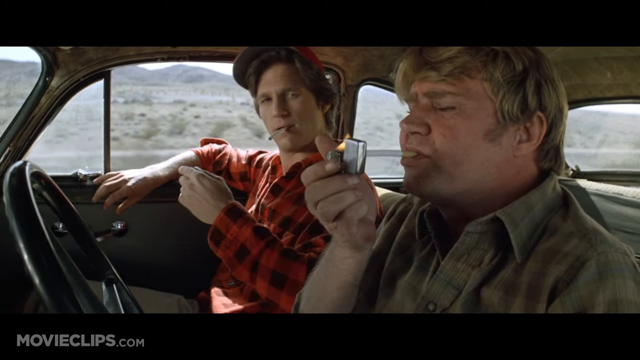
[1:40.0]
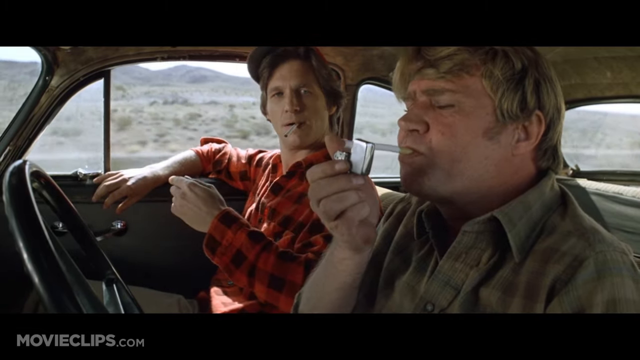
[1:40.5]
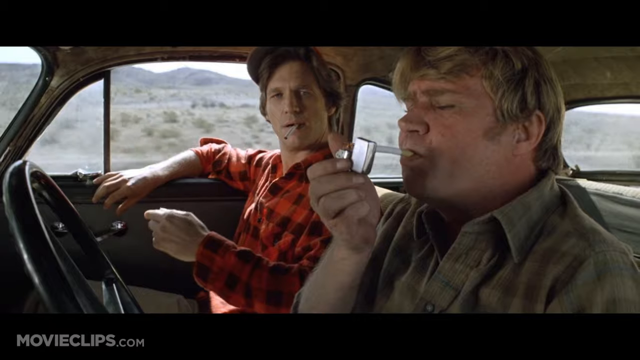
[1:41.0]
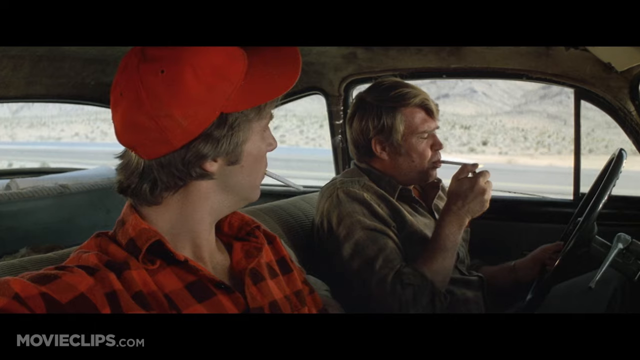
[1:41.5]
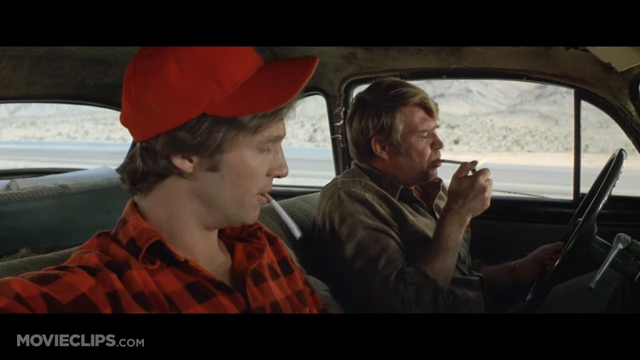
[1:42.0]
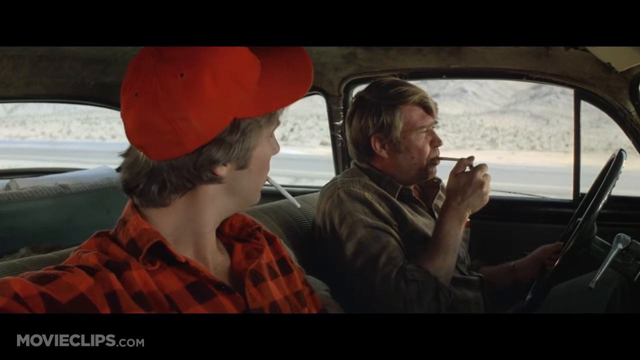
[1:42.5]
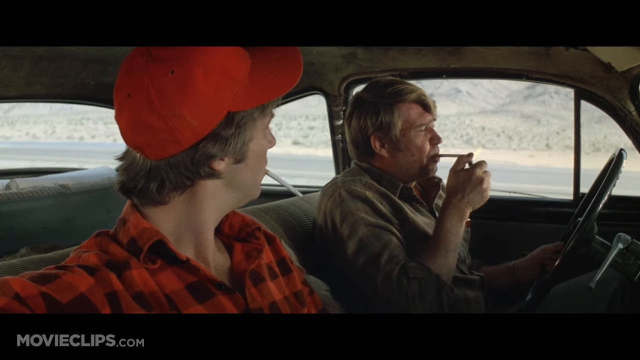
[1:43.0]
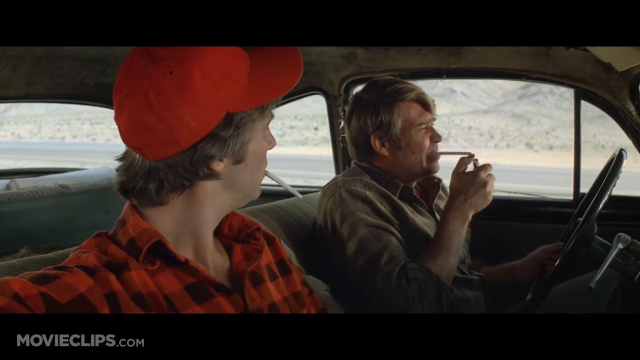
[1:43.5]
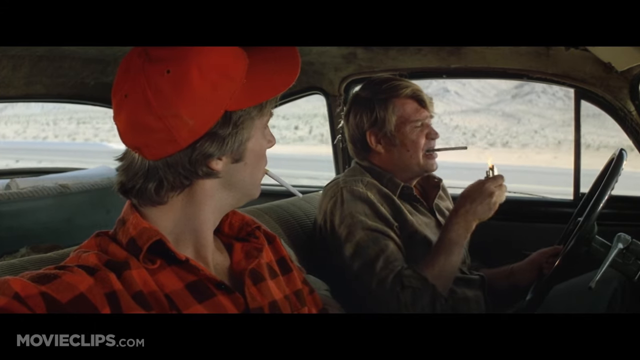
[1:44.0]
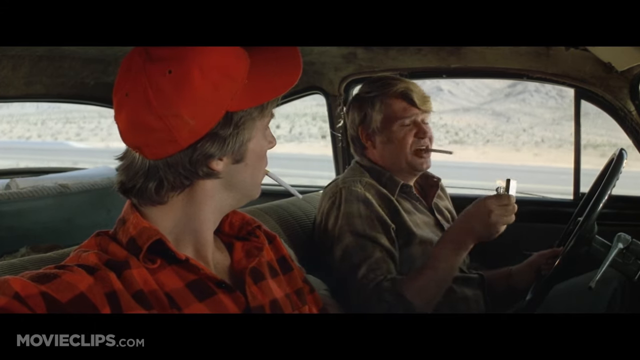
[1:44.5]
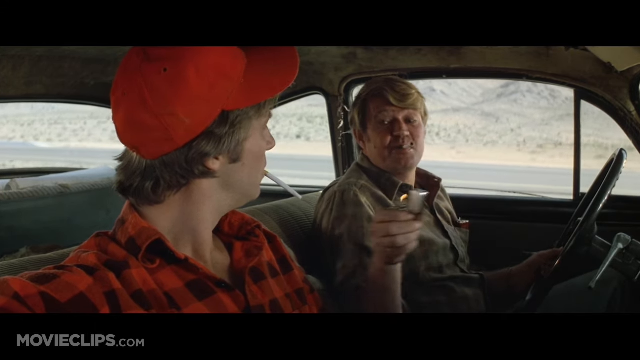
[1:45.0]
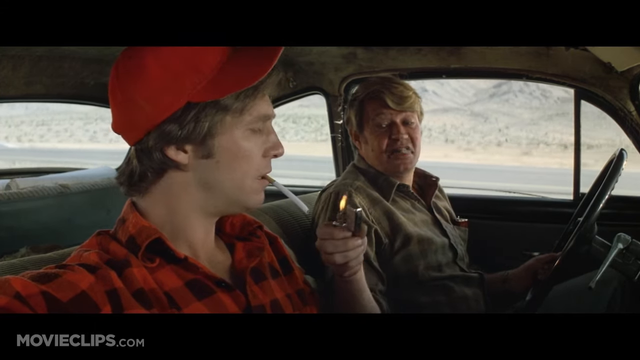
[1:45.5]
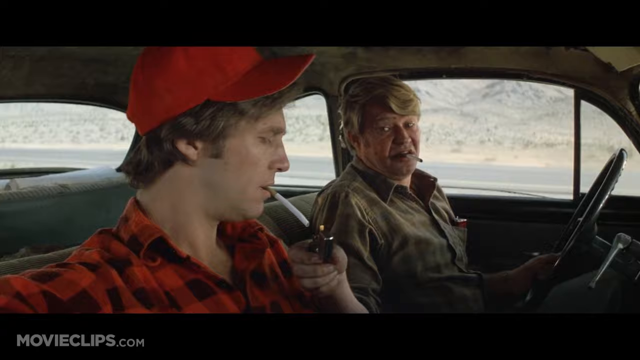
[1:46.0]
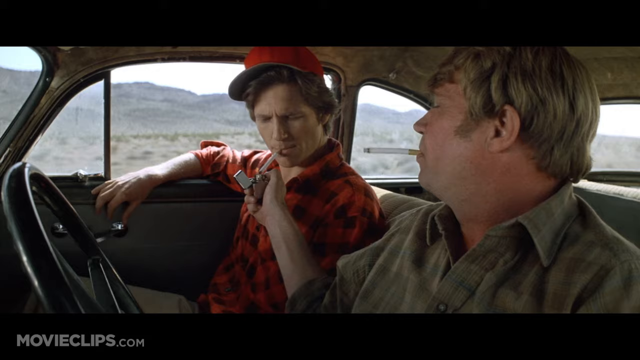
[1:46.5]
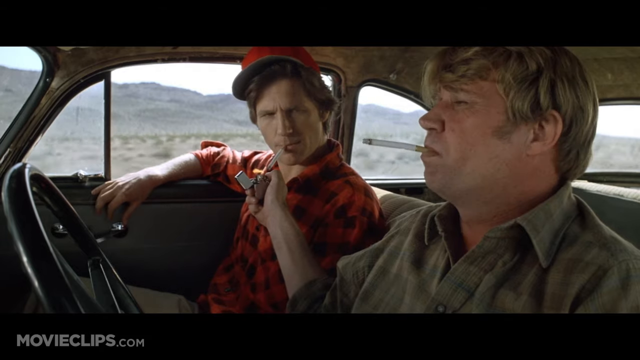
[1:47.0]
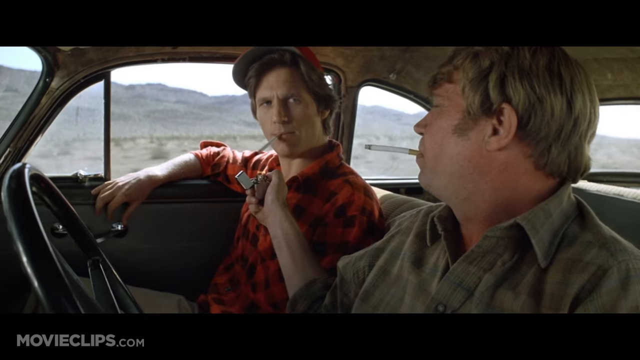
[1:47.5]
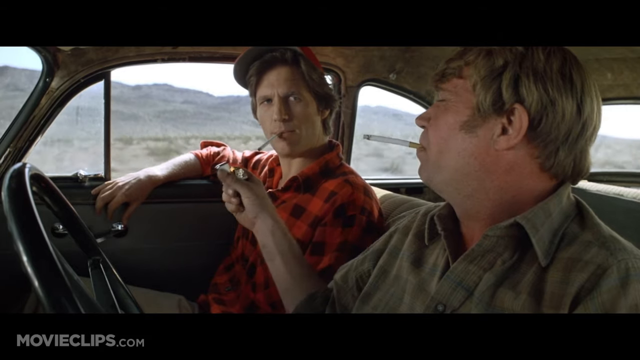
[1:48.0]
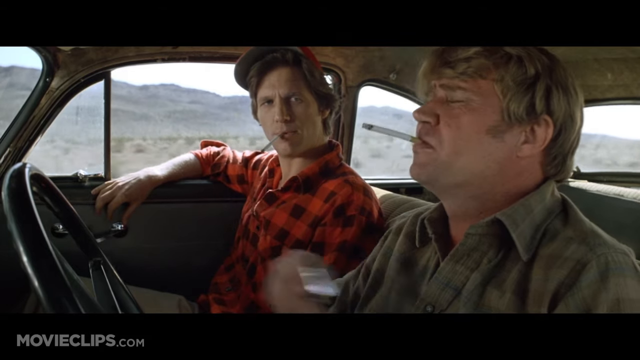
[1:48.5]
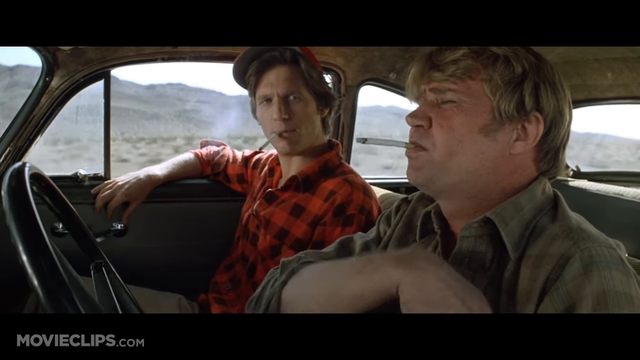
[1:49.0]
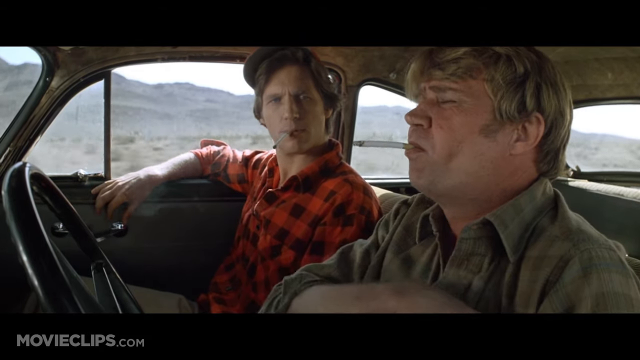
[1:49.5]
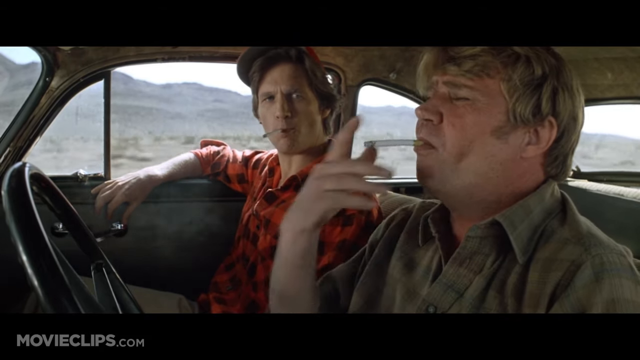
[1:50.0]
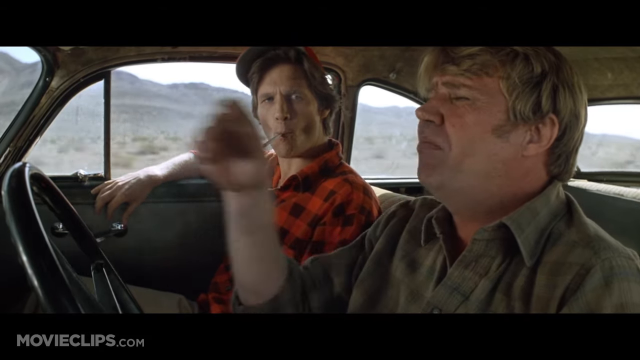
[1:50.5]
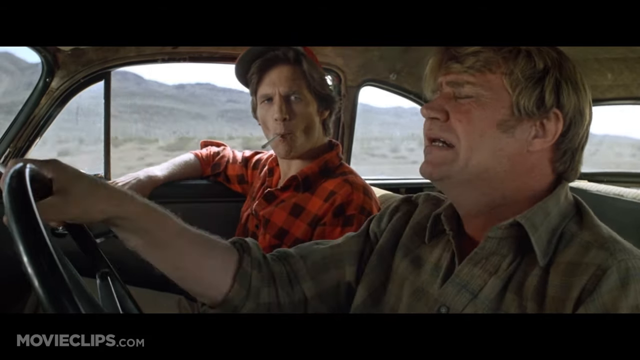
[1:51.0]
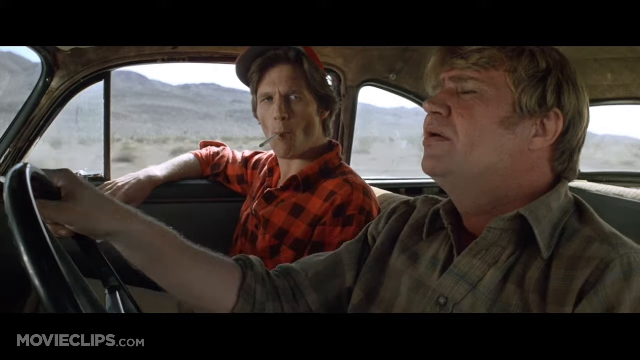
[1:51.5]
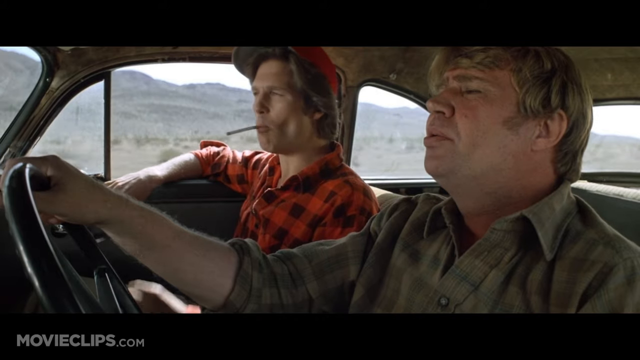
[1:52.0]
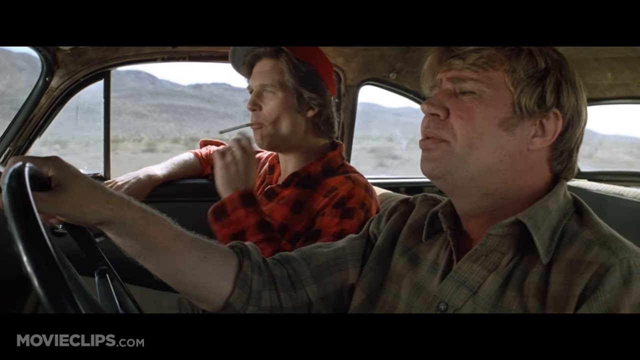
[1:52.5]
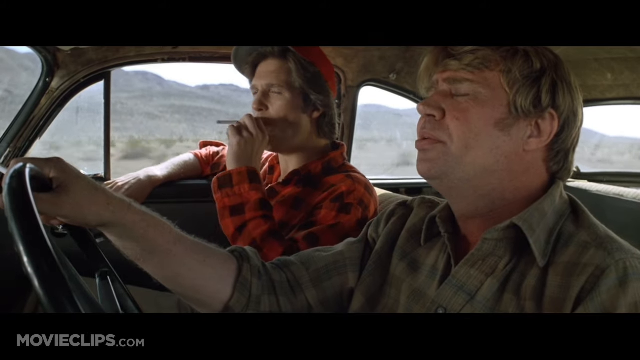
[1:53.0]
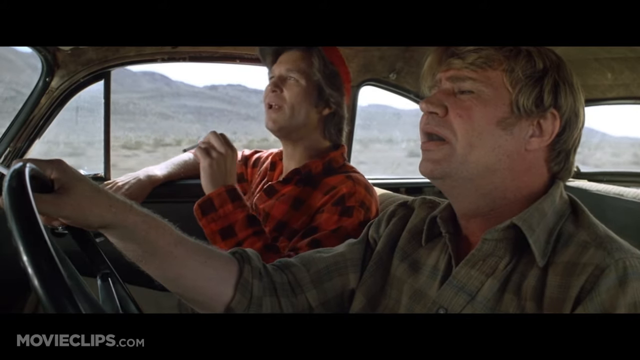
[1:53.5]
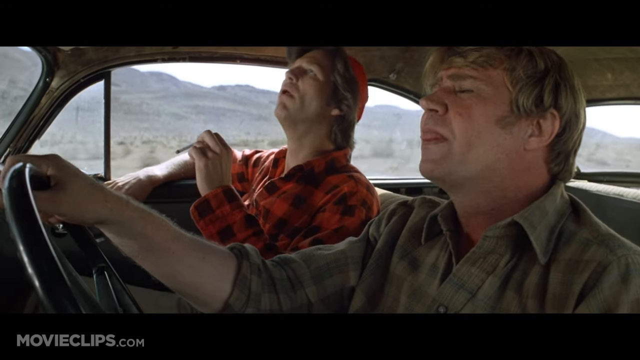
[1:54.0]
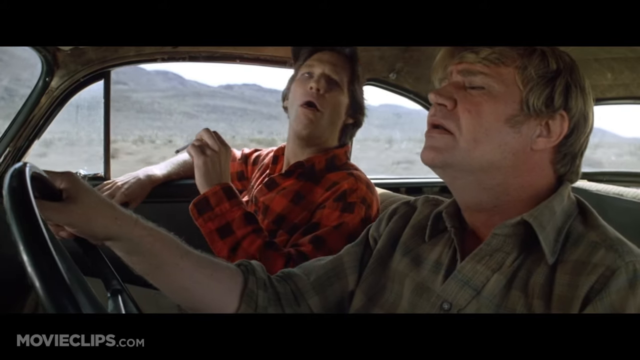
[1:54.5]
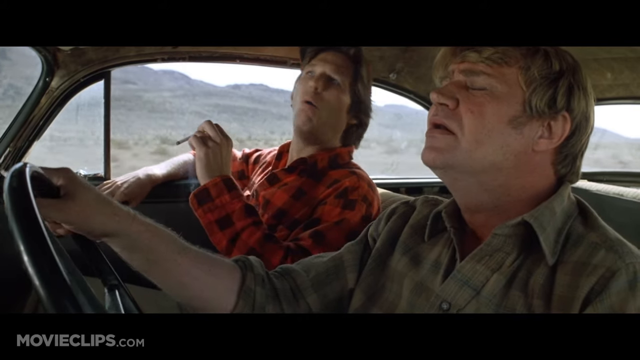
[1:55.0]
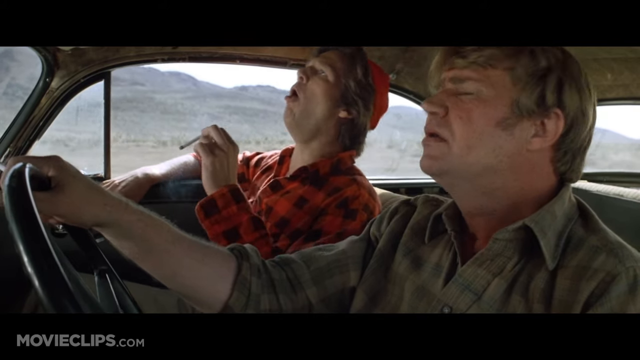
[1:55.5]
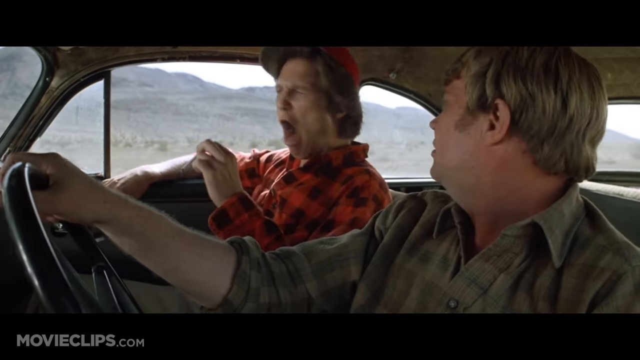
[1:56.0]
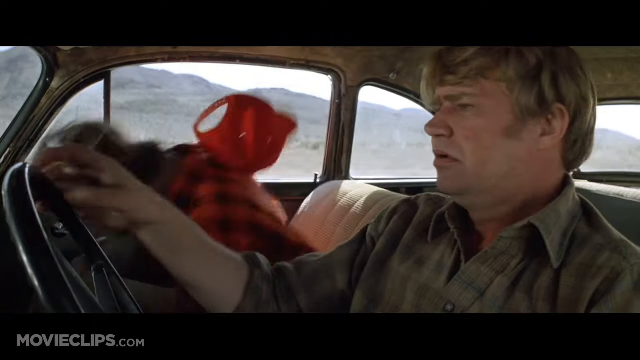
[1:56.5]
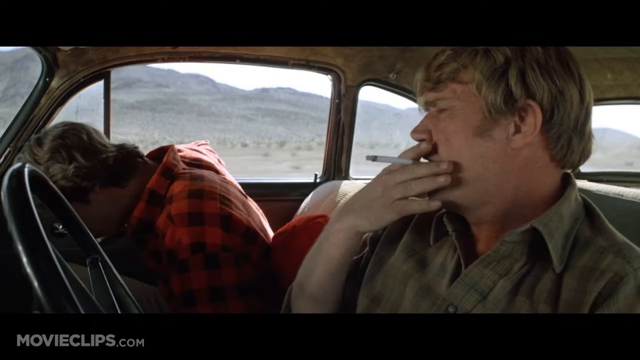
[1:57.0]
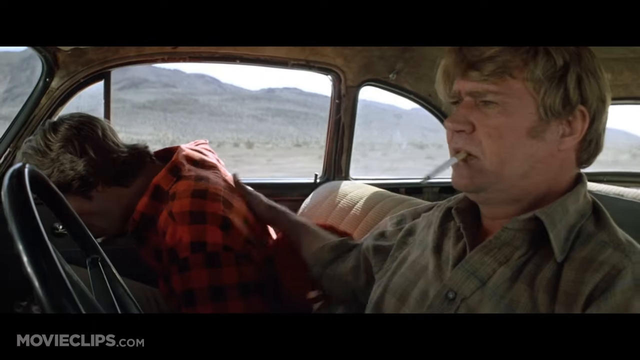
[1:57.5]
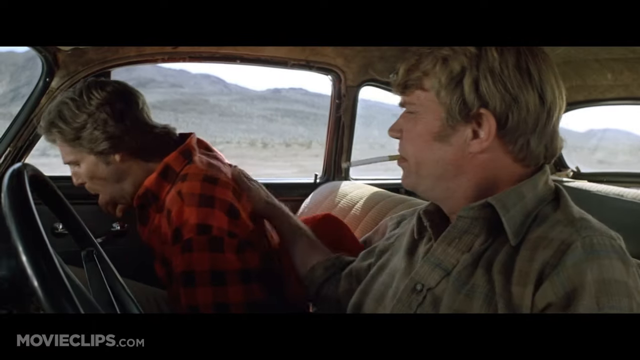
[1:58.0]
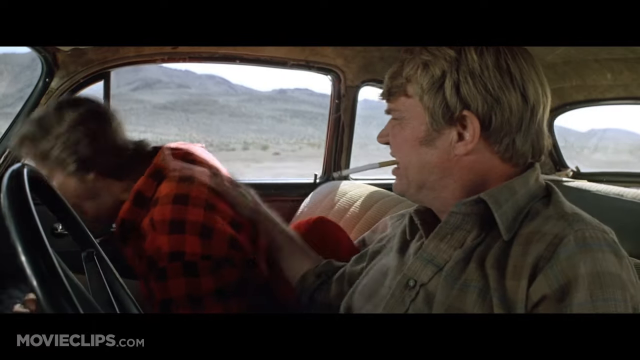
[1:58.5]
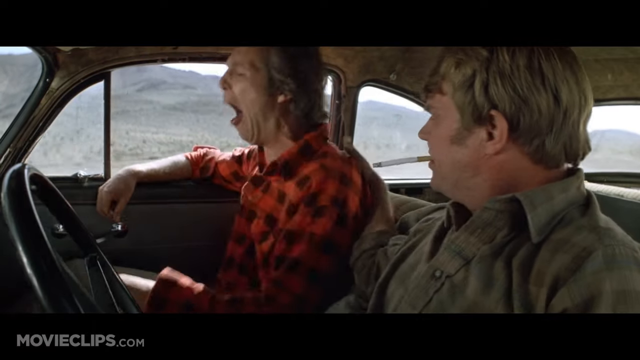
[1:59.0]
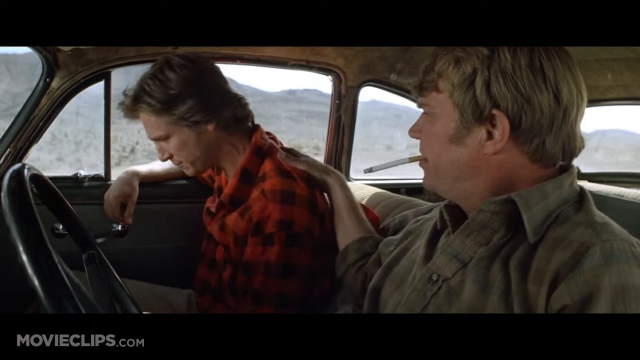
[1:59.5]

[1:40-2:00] The older man helps the younger man light his cigarette. The younger man, who seemingly has never smoked before, tries it and starts coughing very hard, and his head falls. The older man tries to calm him by hitting his back a little. The older man keeps smoking and keeps driving. The younger man coughs violently, as if dying, and seems like he would never try smoking again. The two men keep driving, and trees are visible outside the car window.